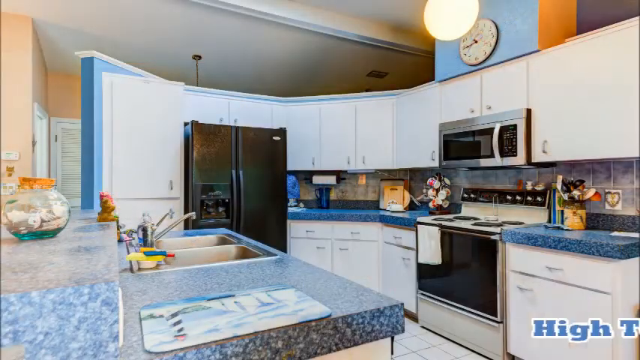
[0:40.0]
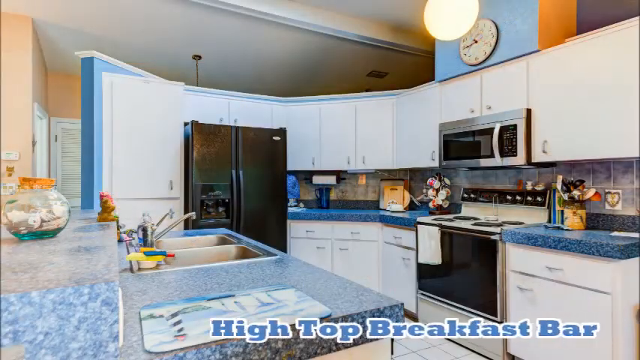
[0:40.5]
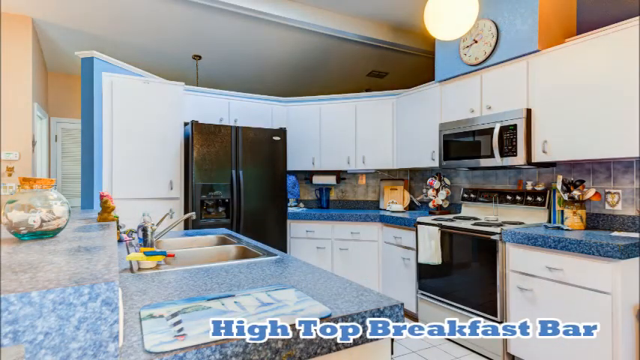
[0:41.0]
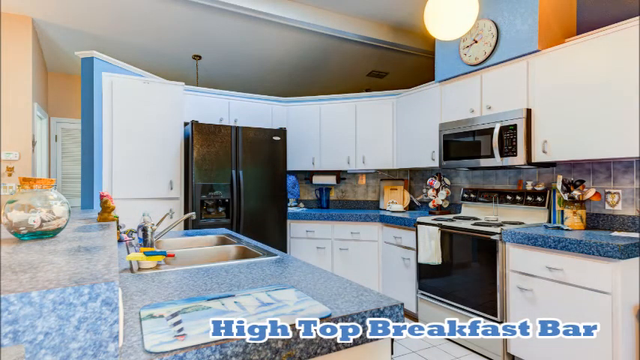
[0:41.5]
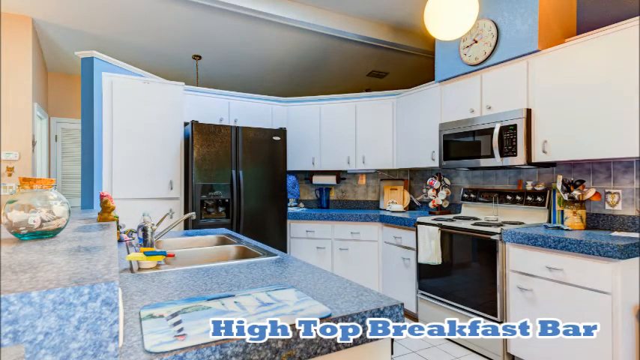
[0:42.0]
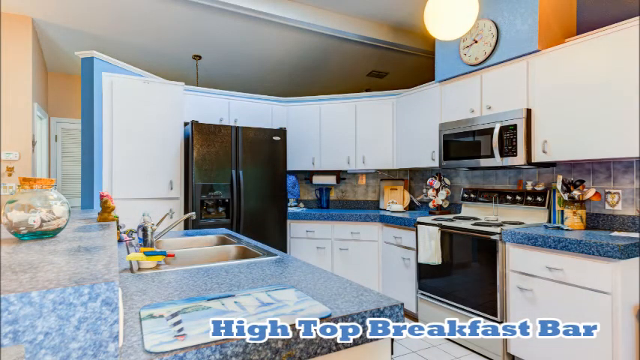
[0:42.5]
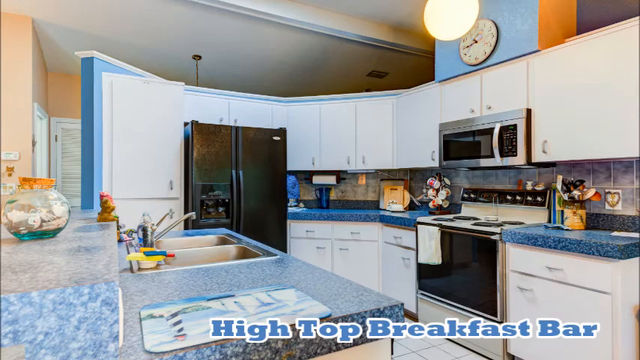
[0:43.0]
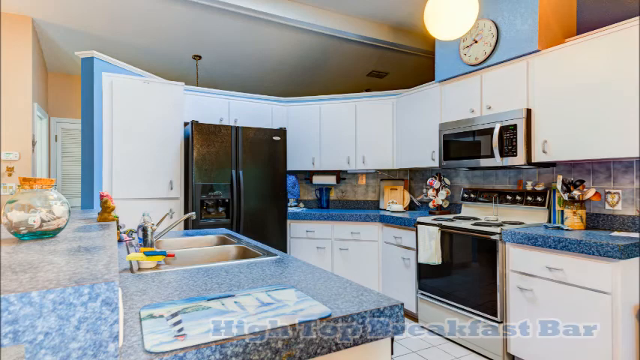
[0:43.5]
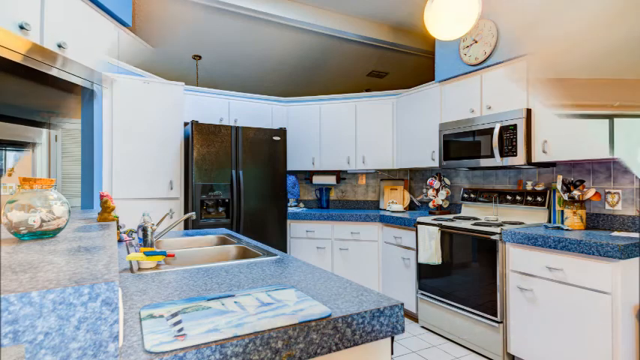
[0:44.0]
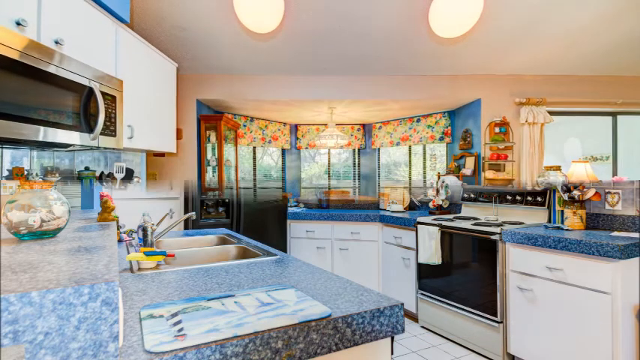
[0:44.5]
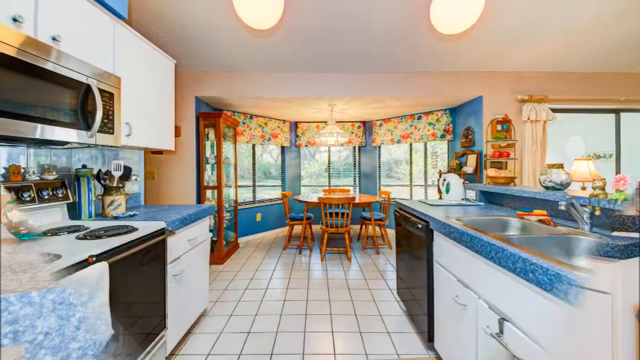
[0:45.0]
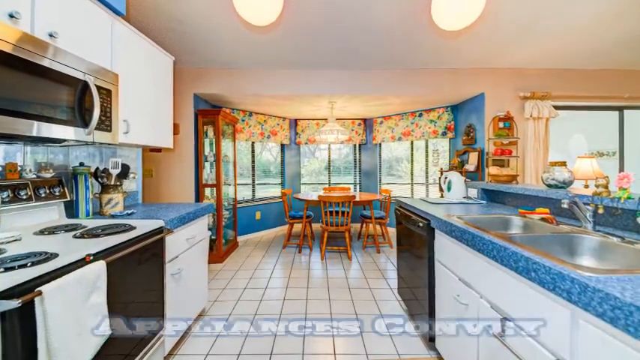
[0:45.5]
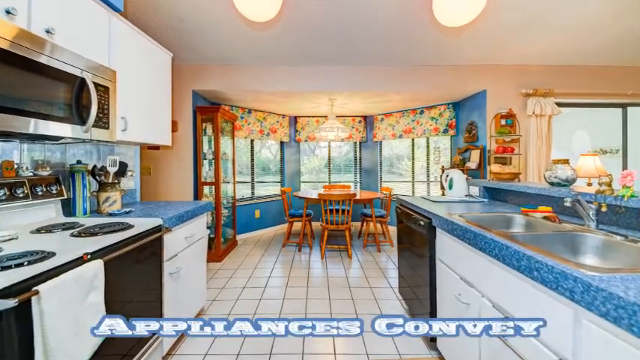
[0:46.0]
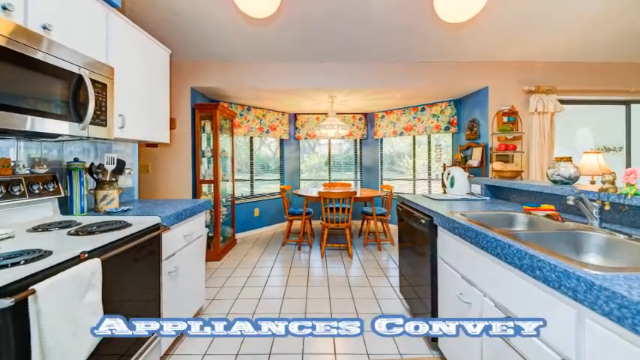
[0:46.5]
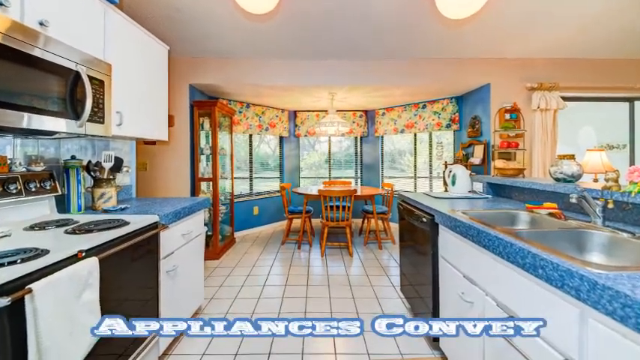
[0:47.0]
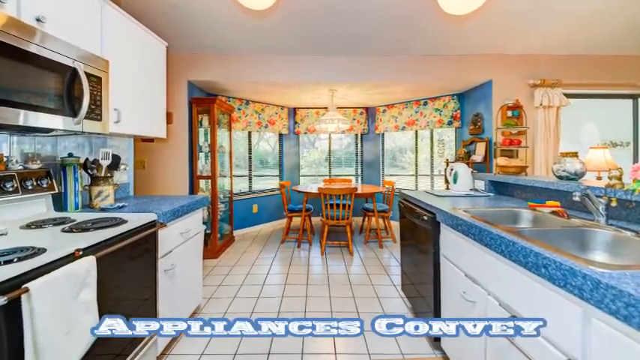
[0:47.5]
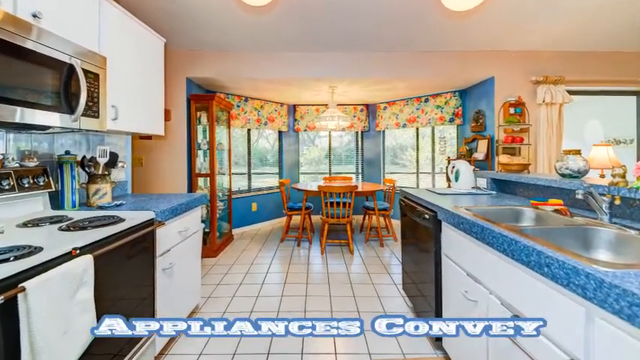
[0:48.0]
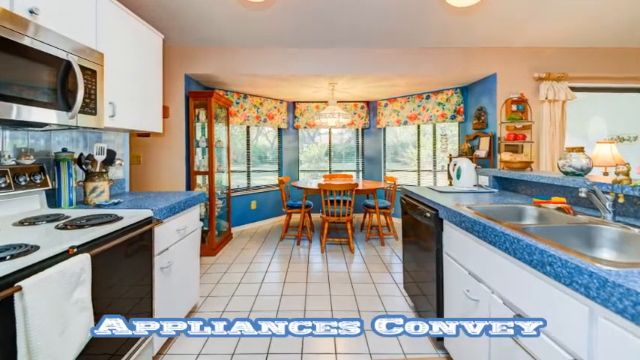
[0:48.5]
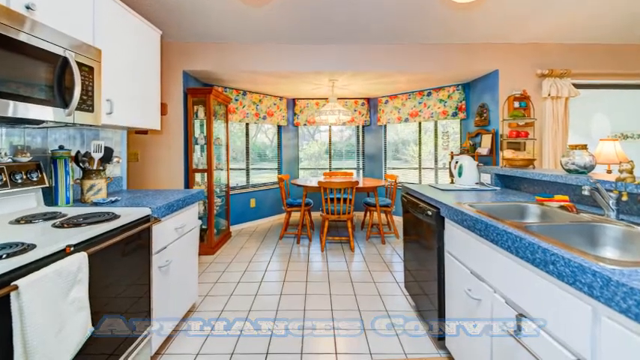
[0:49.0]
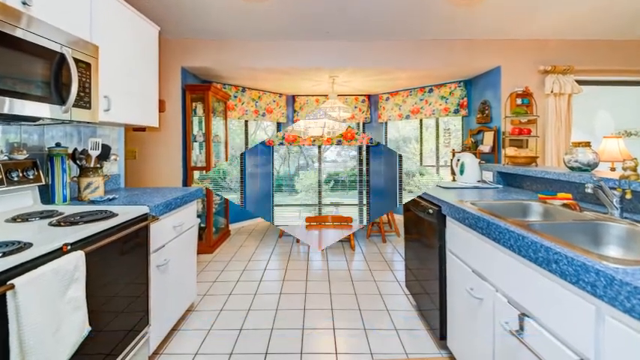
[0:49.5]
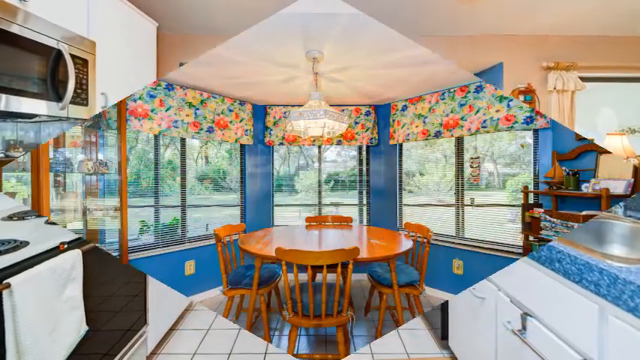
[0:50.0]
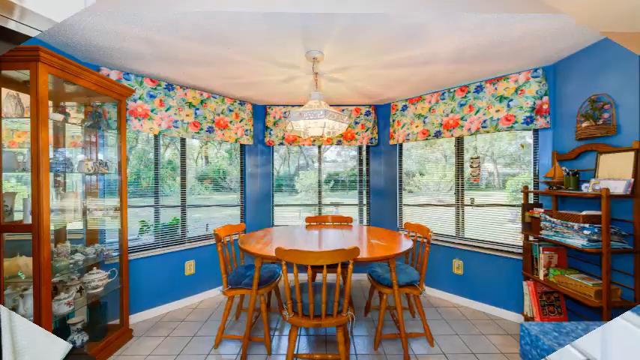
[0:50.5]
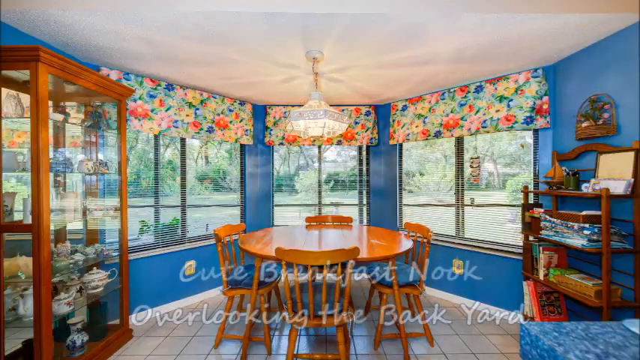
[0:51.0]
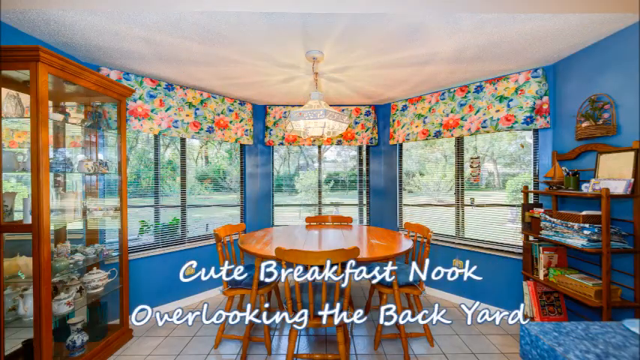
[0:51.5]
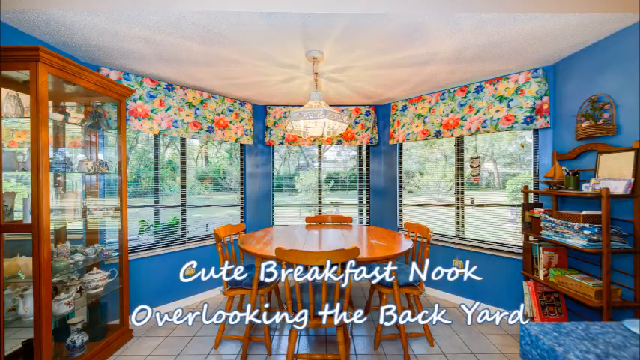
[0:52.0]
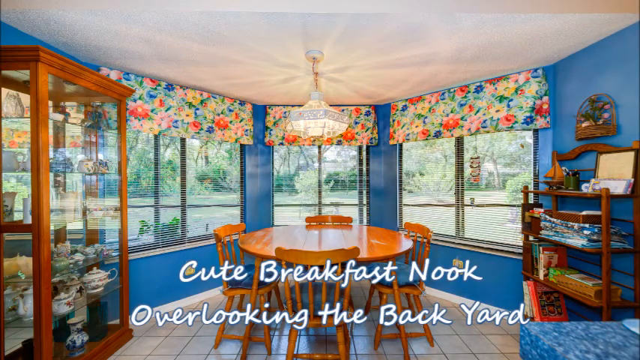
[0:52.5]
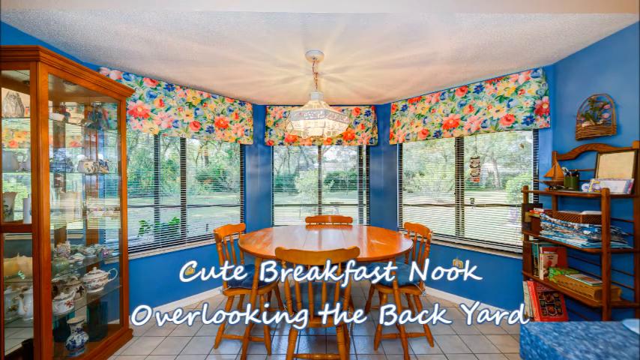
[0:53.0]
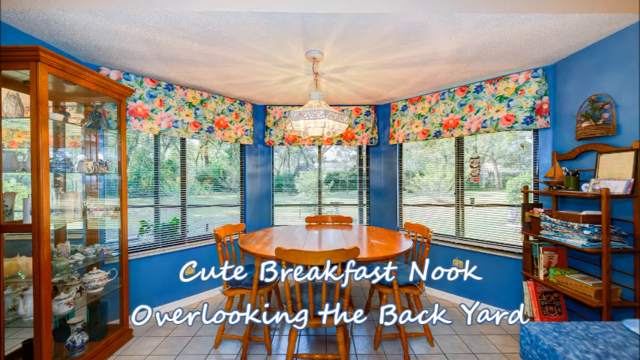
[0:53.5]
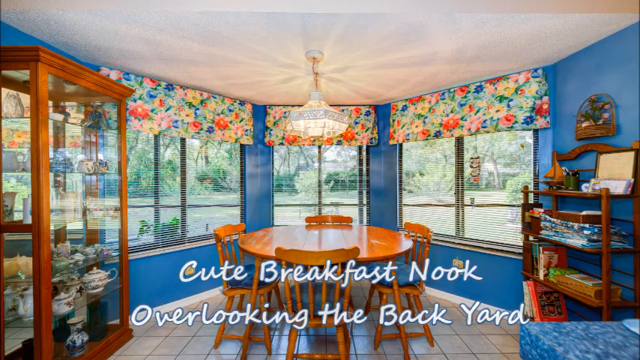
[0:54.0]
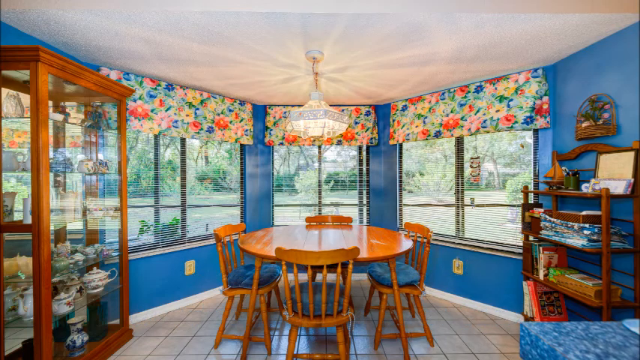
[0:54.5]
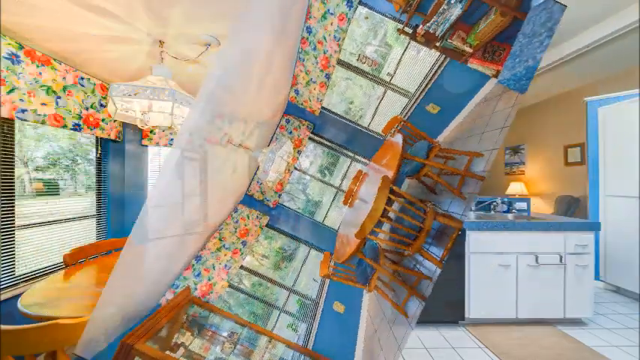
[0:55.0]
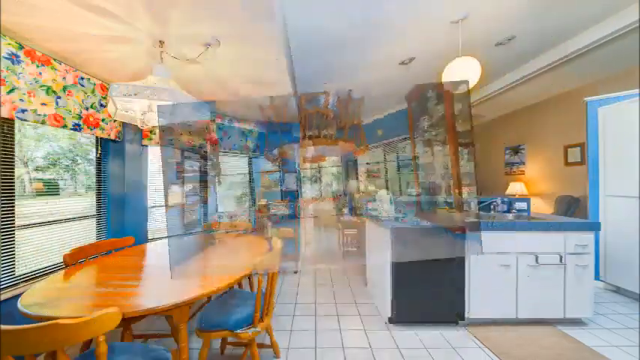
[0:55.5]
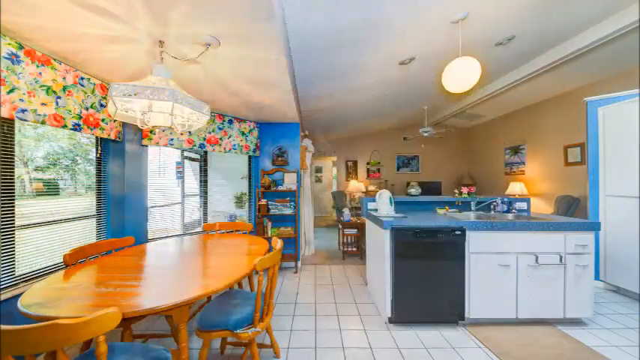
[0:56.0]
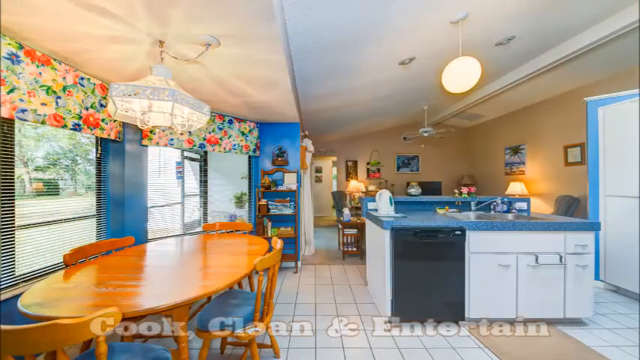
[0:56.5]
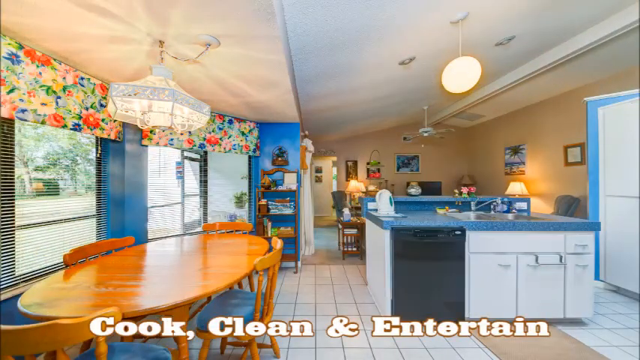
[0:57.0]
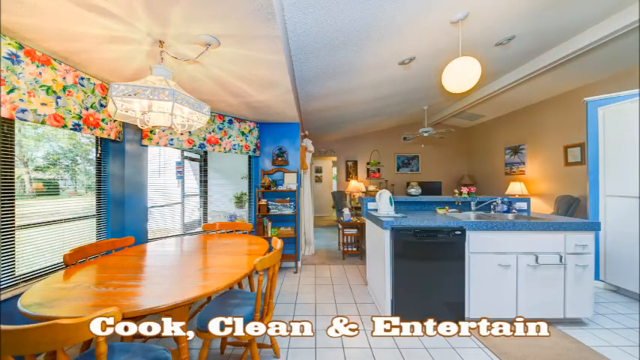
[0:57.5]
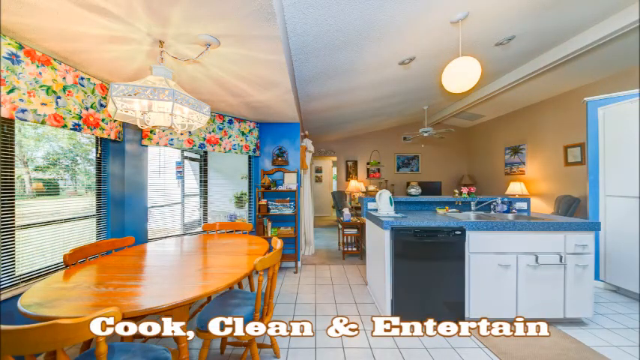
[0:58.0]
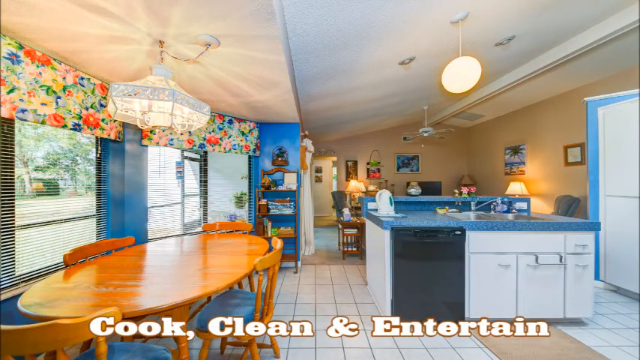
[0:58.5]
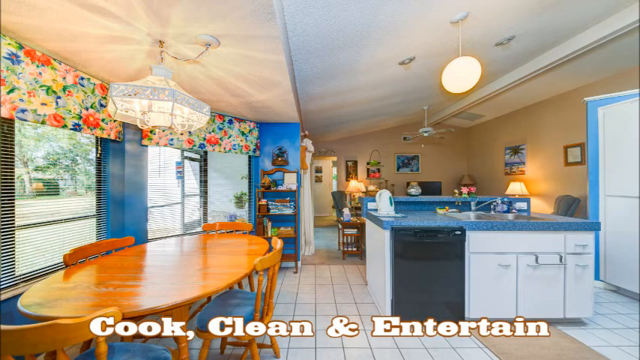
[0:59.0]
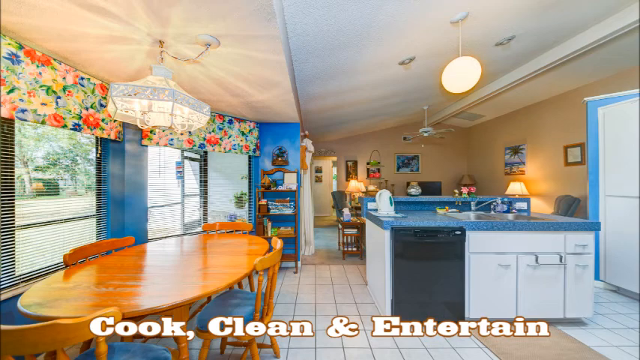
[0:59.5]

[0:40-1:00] The view focuses in on the kitchen, which has blue counters and white cabinets. A clock is over the microwave and stove area. The silver microwave is set into the kitchen cabinets, with a white and black stove underneath it that looks like an older style electric stove. A black refrigerator appears to have an ice maker function. Various kitchen utensils are on the counters. The video pans across the rest of the kitchen area and focuses on a small breakfast nook, with text saying it is "overlooking the backyard." The nook's walls are painted blue to coordinate with the counters, and a round wooden table with four chairs is in the middle; the chairs have blue pads that match the walls. The windows have mini blinds, and above them are valances with blue and green backgrounds covered in colorful flowers. Text under the kitchen reads "cook, clean, and entertain." The kitchen also has a breakfast bar.